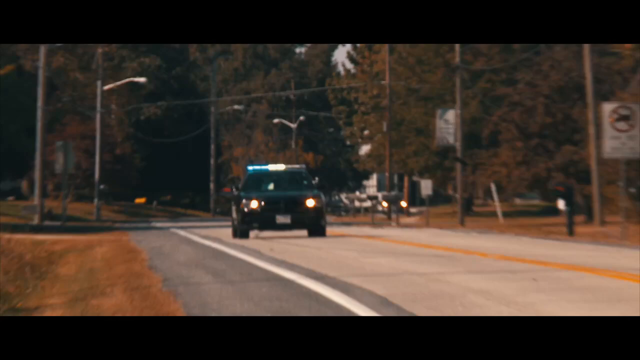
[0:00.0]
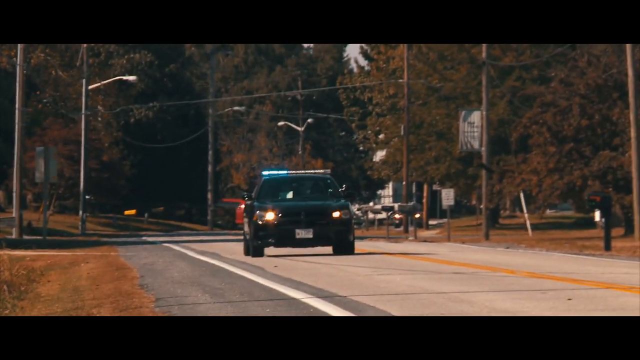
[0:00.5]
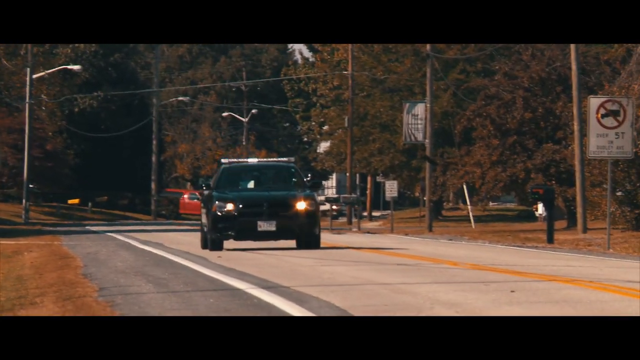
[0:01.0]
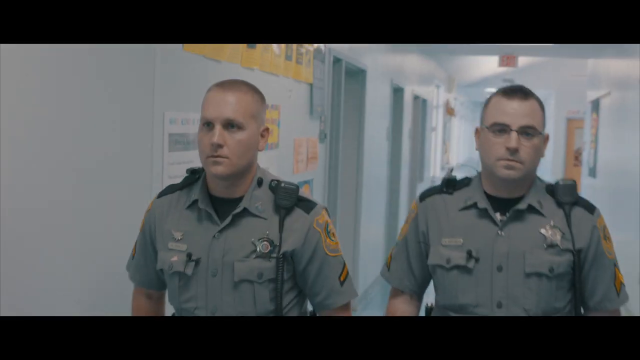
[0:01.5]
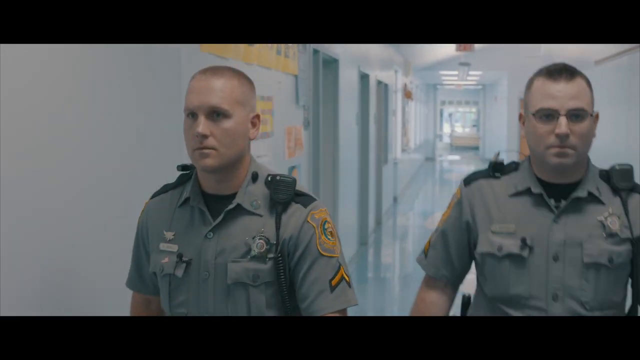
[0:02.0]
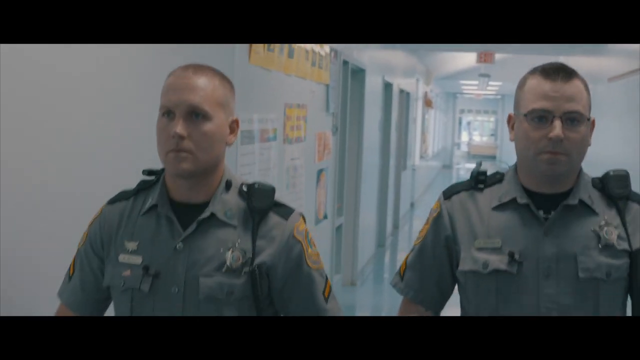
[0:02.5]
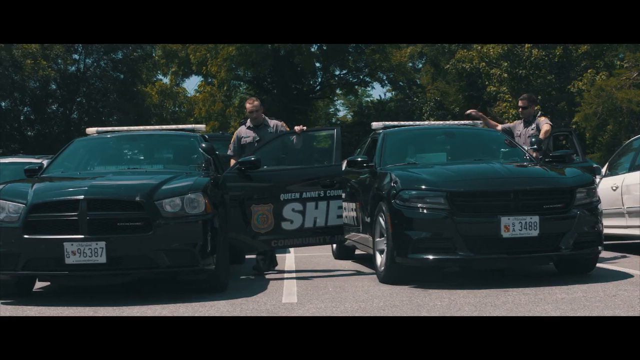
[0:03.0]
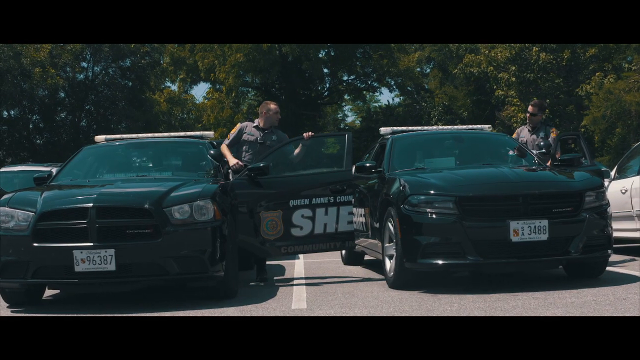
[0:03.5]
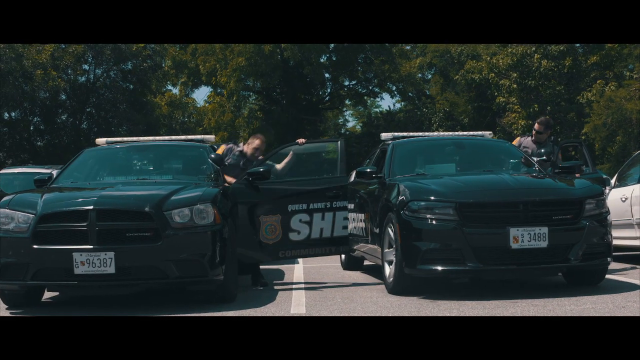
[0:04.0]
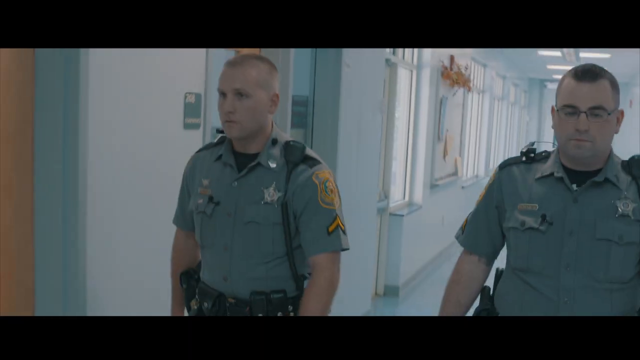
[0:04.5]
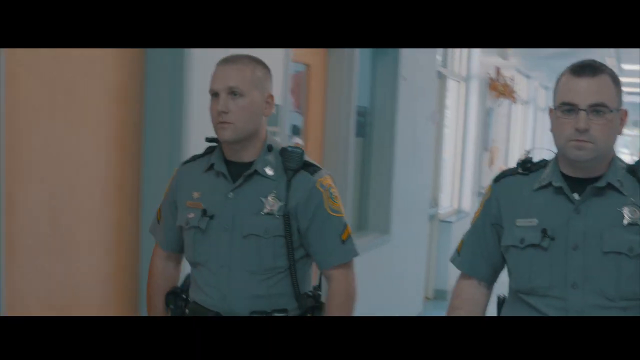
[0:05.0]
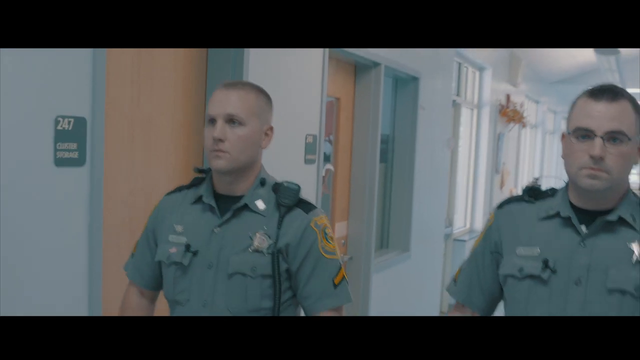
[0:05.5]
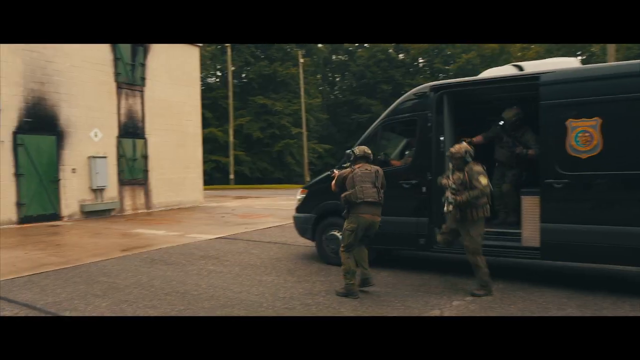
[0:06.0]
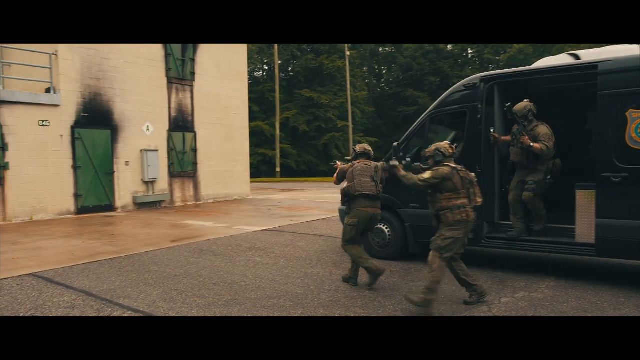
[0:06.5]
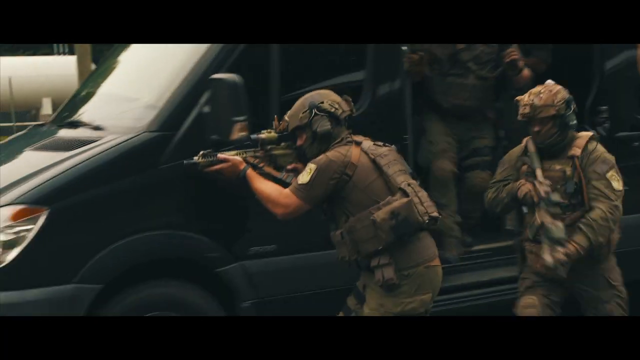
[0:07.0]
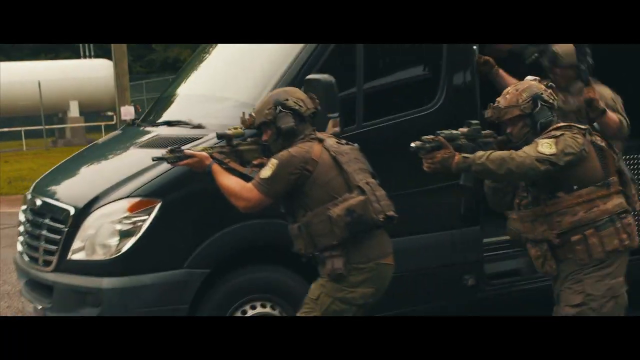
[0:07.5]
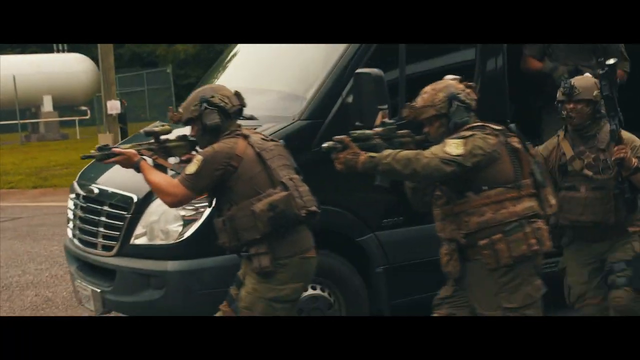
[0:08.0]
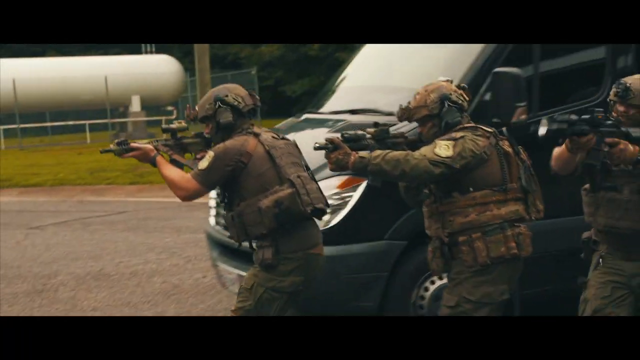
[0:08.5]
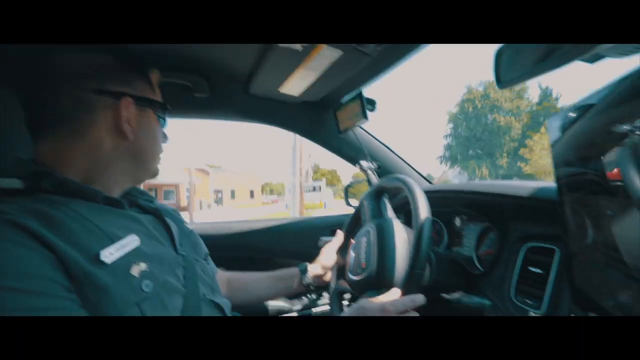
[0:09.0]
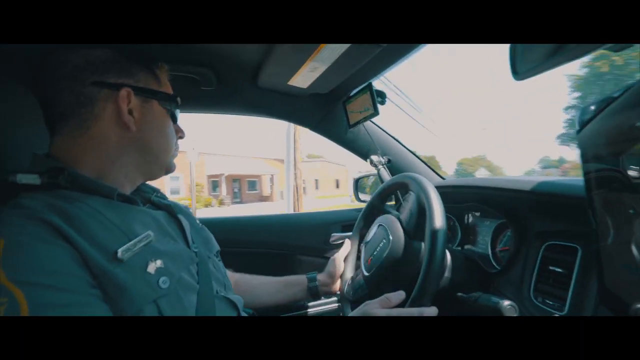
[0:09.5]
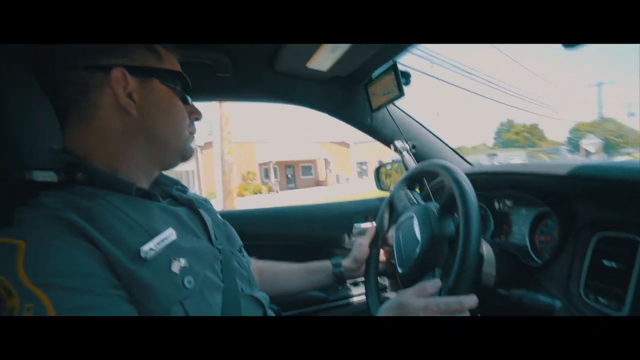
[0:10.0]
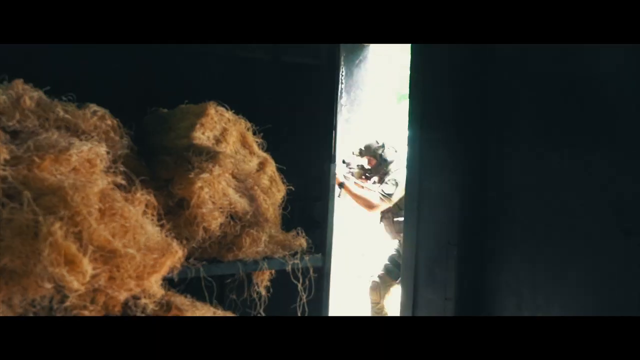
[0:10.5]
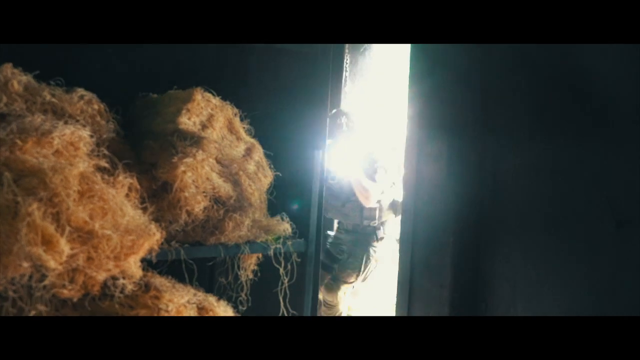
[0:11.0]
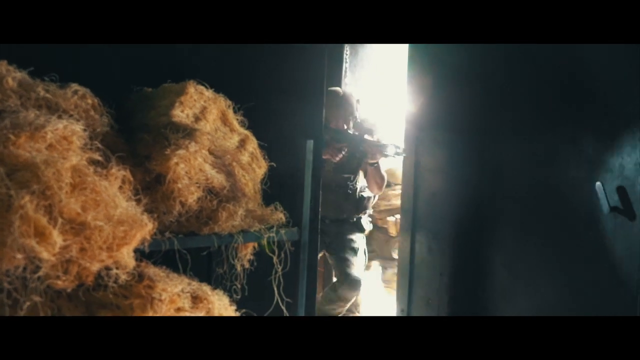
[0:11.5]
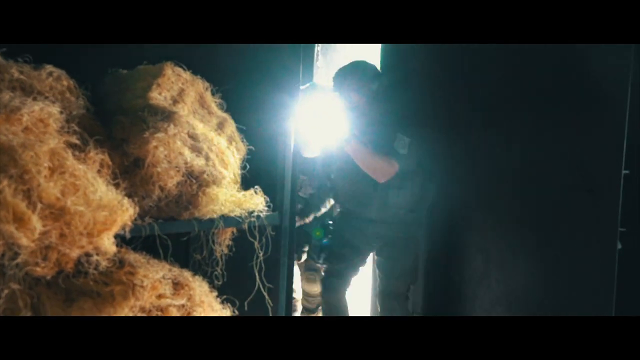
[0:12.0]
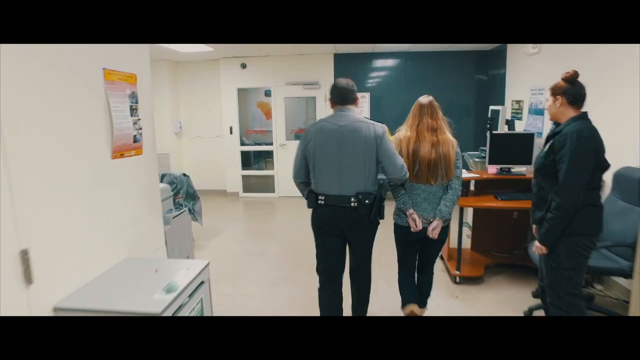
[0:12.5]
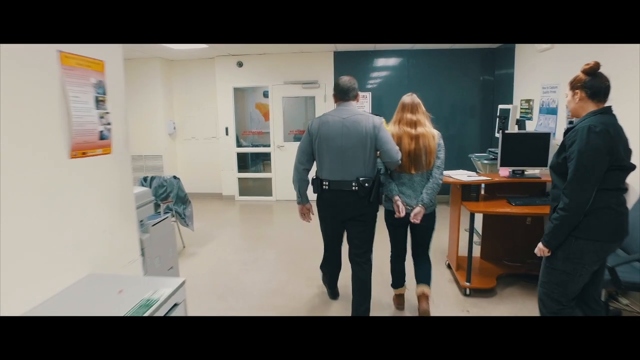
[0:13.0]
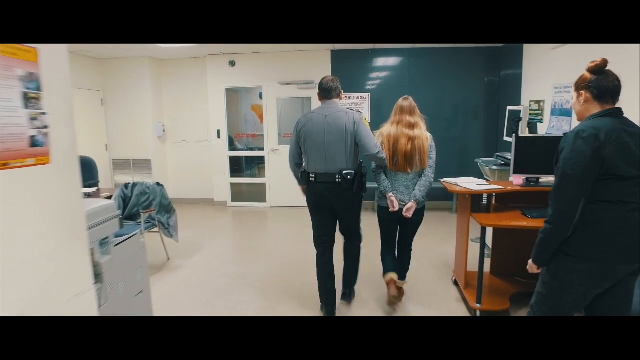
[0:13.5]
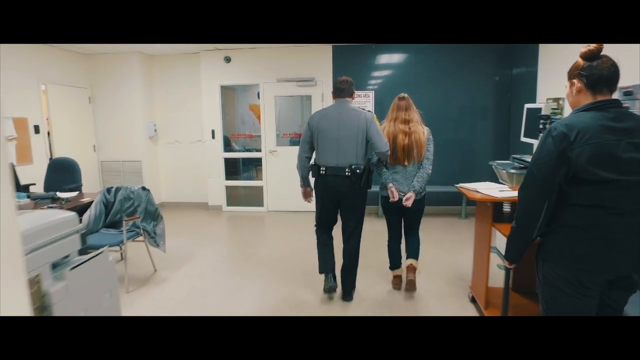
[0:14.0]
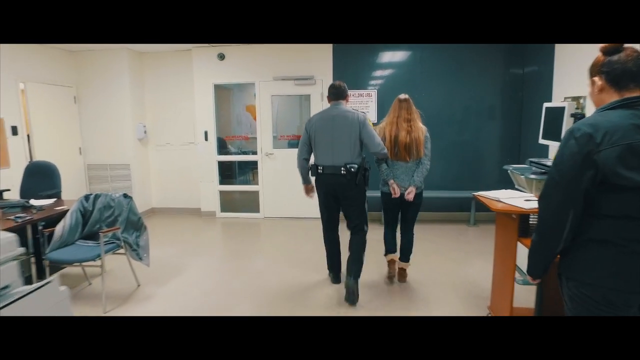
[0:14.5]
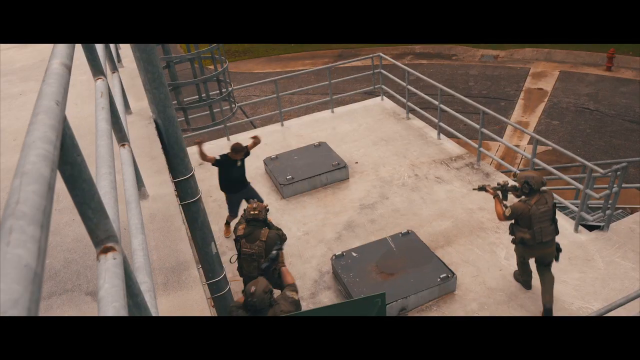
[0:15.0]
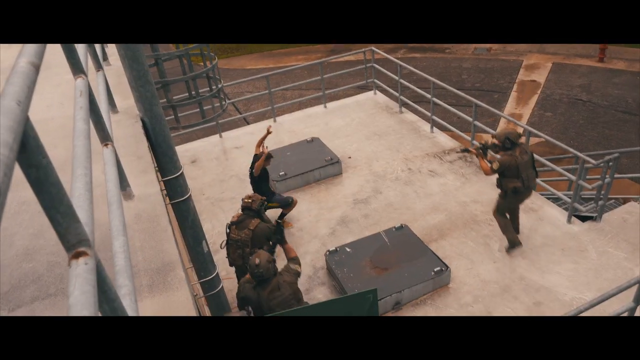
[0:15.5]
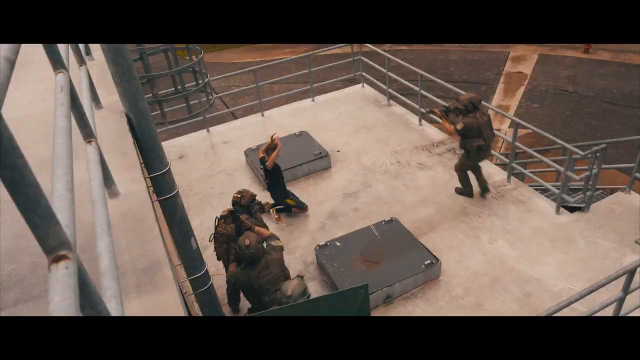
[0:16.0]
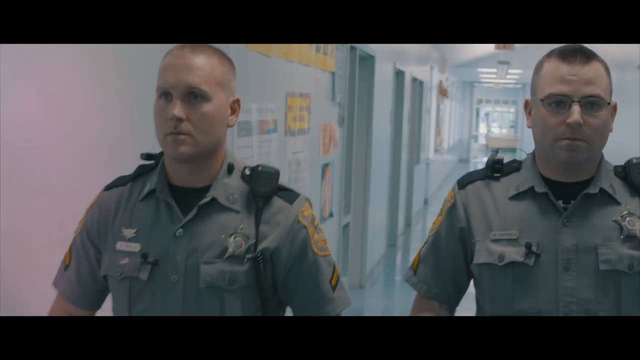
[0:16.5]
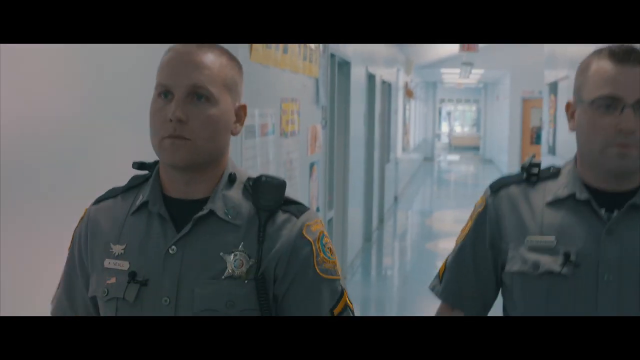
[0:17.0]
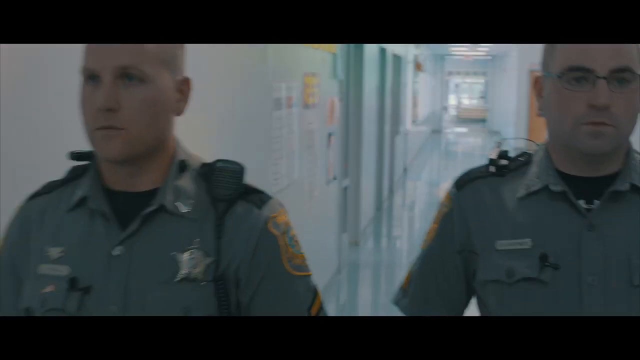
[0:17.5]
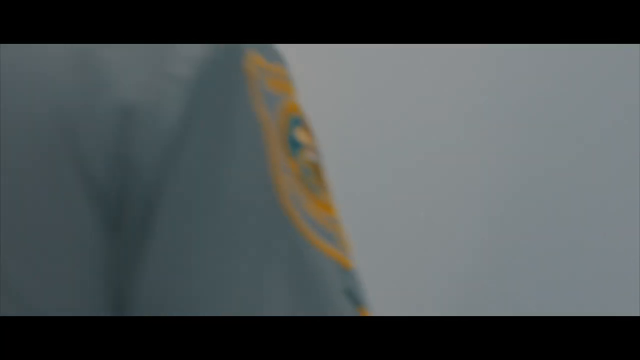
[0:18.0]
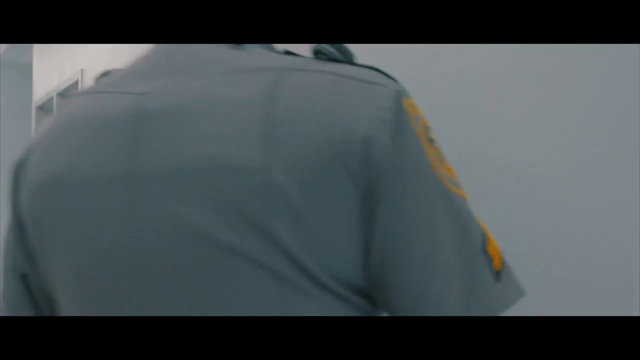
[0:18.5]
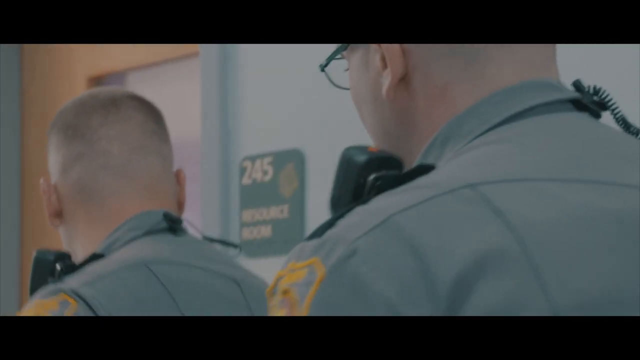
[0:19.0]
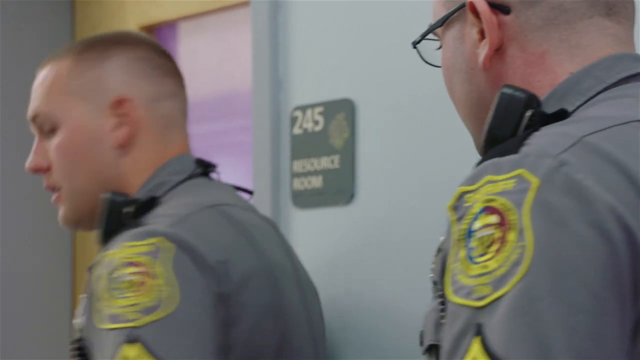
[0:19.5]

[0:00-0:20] A police car with its lights on drives along a road. The video transitions to two Caucasian police officers, one wearing glasses and the other not, both in gray uniforms with yellow badges on their shoulders, police radios and police gear. Several different scenes follow: the officers getting into their sheriff cars, a special forces unit pushing a building, a police officer driving inside his vehicle, the special forces pushing and breaching a sort of area, a female in custody, and some people coming out with their hands raised. The video then transitions back to the two male police officers.